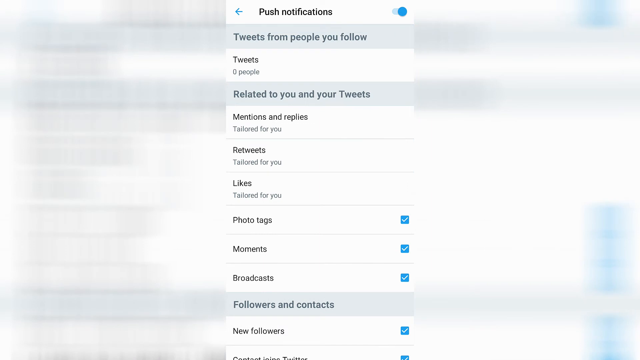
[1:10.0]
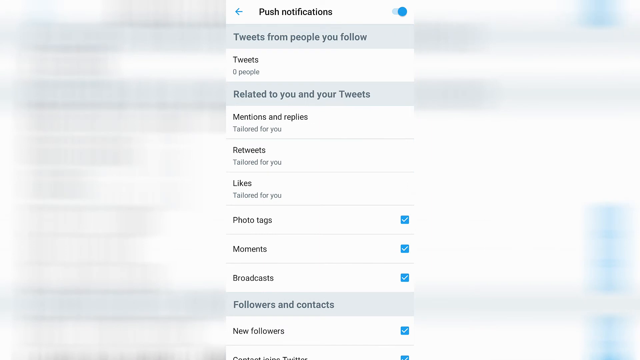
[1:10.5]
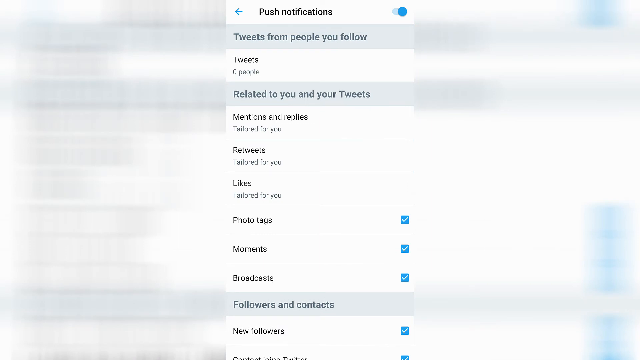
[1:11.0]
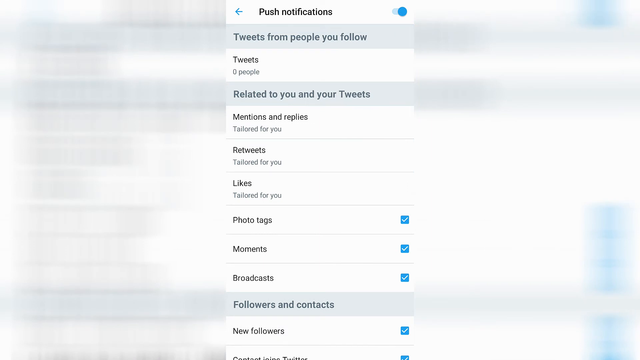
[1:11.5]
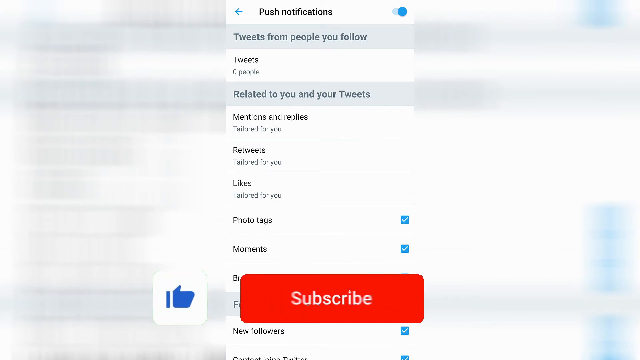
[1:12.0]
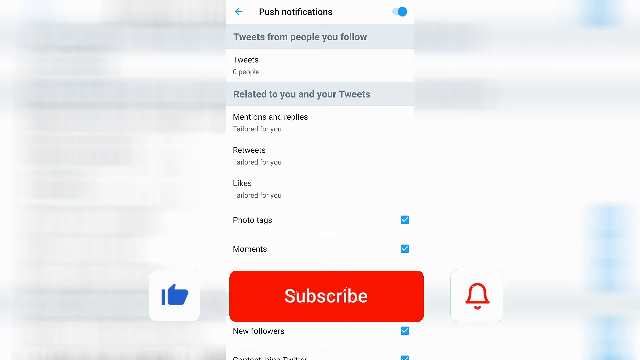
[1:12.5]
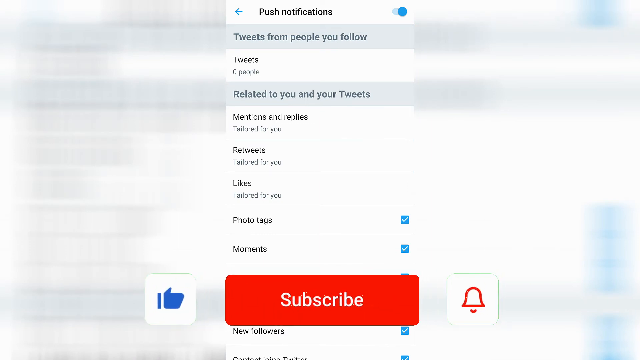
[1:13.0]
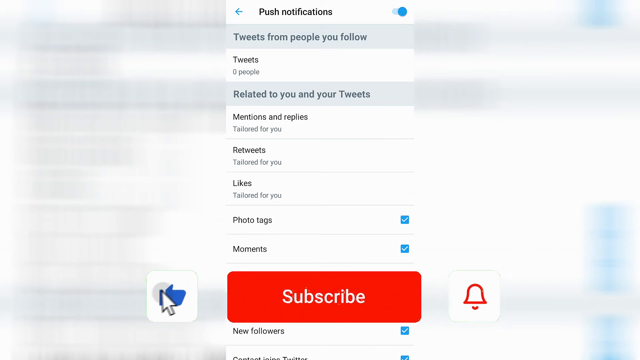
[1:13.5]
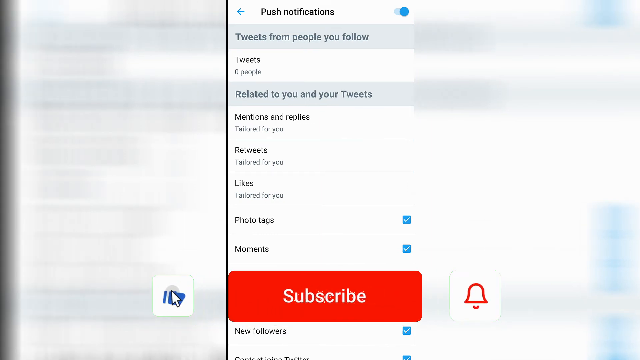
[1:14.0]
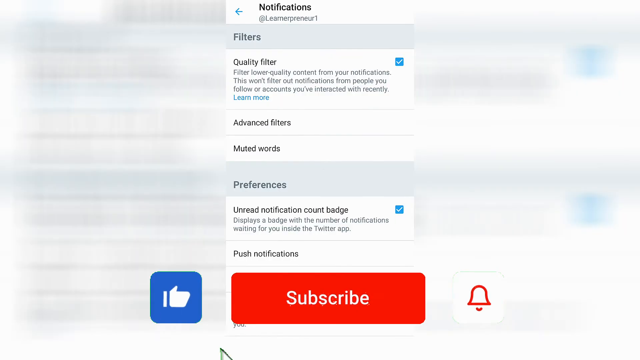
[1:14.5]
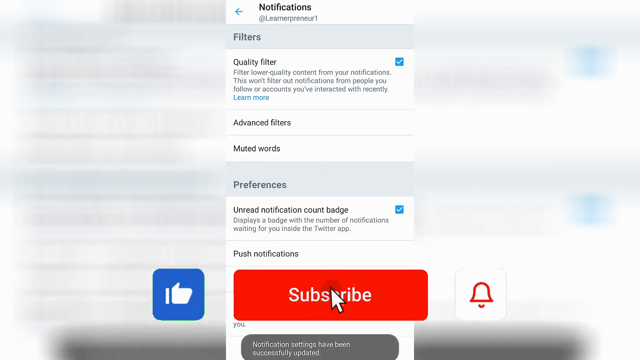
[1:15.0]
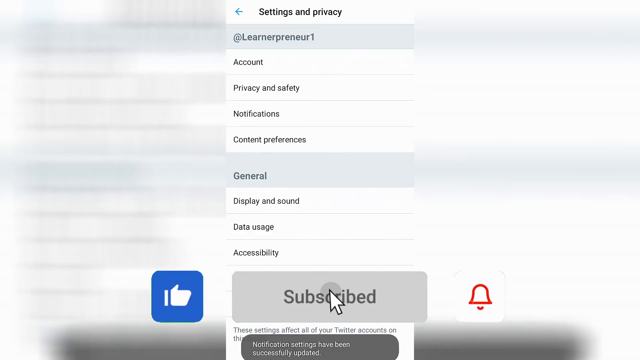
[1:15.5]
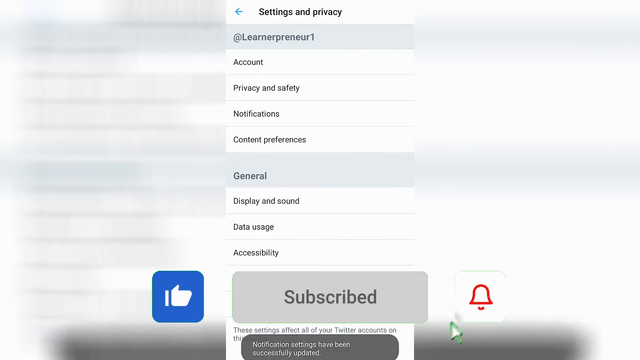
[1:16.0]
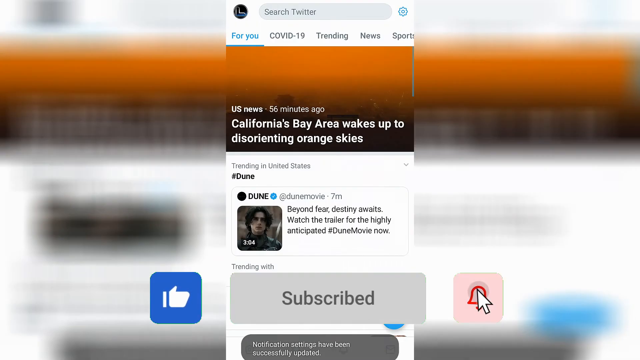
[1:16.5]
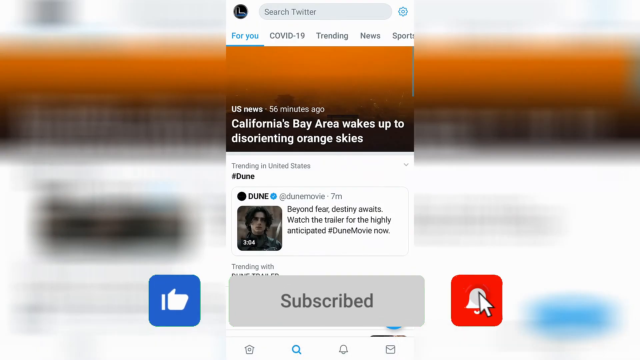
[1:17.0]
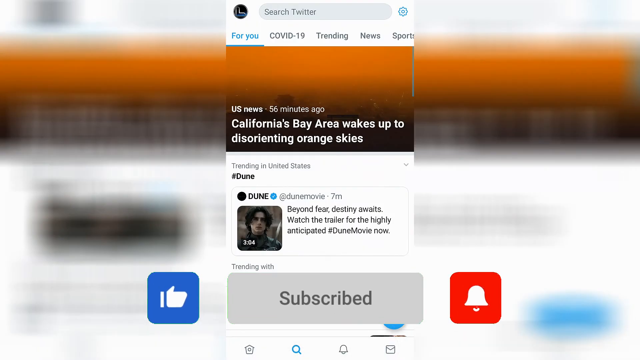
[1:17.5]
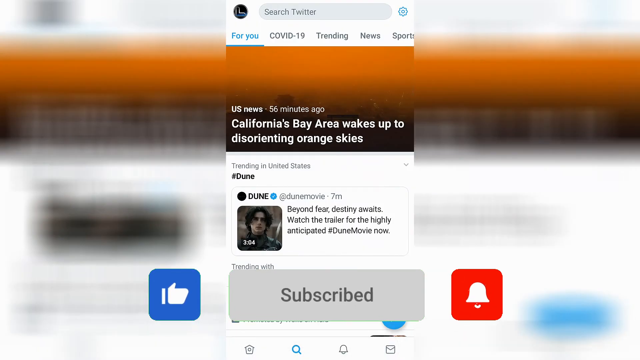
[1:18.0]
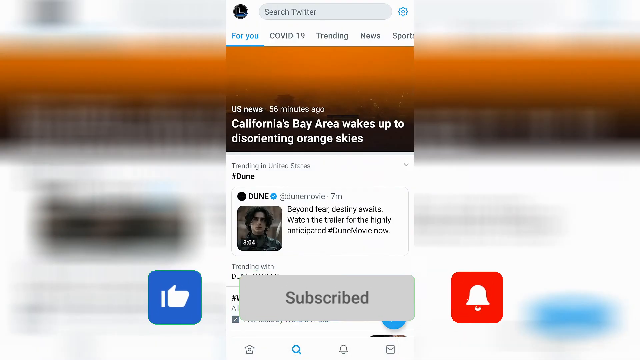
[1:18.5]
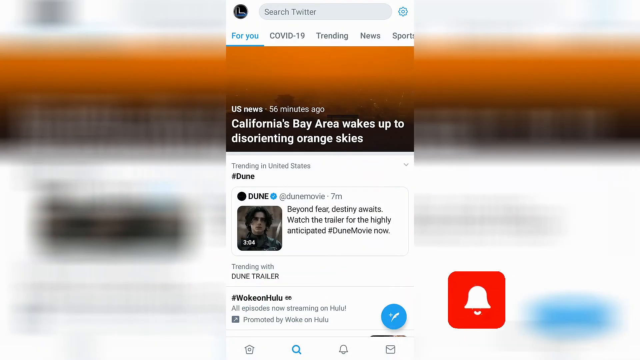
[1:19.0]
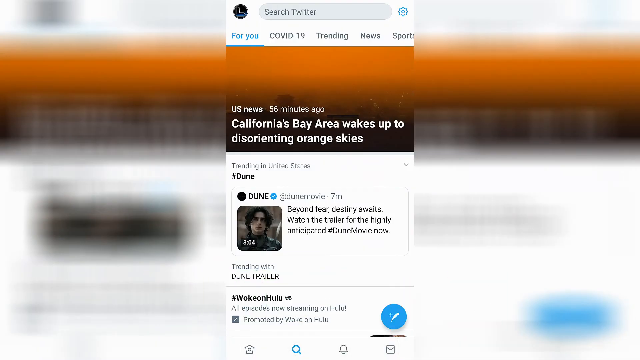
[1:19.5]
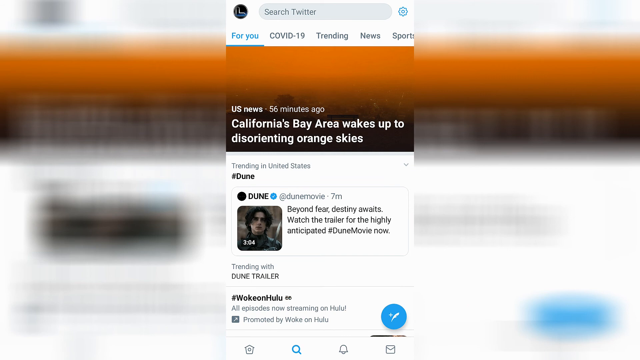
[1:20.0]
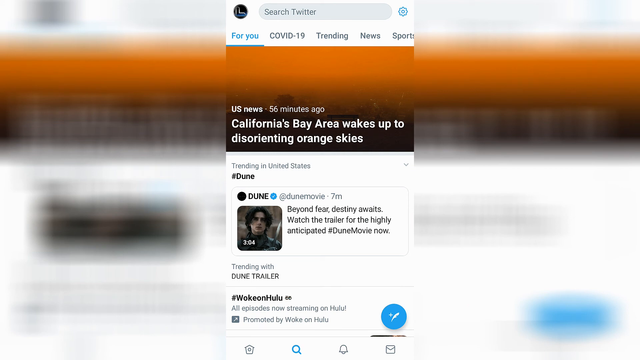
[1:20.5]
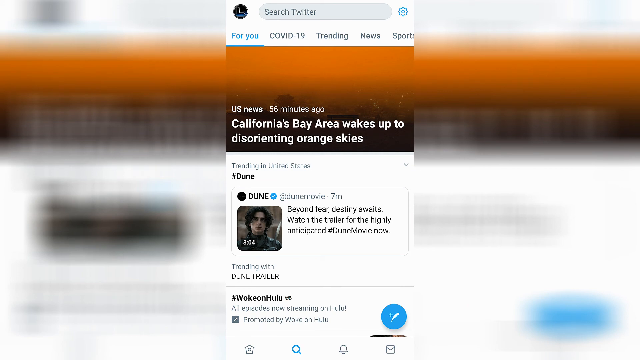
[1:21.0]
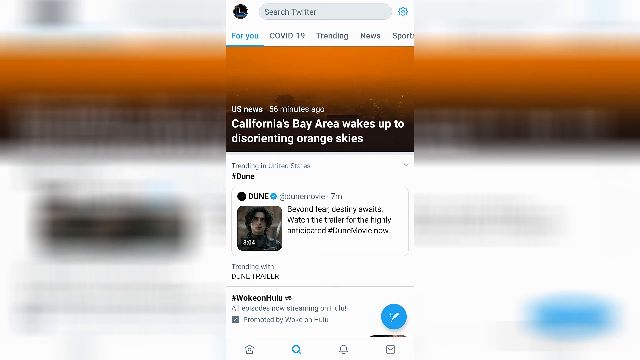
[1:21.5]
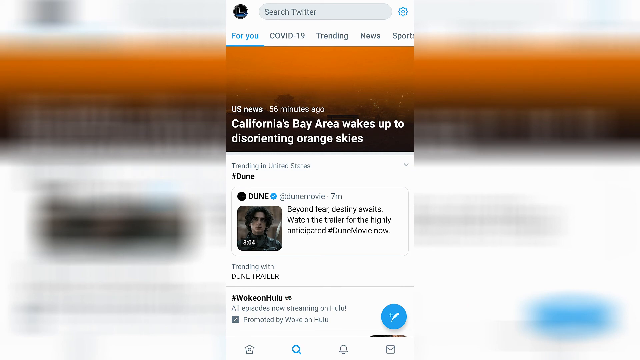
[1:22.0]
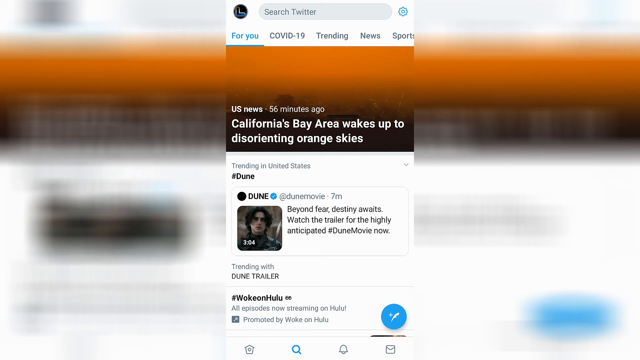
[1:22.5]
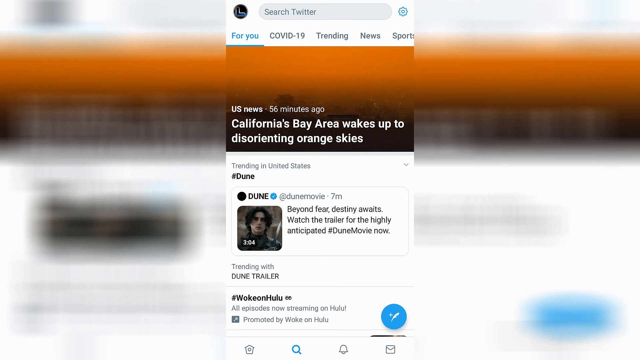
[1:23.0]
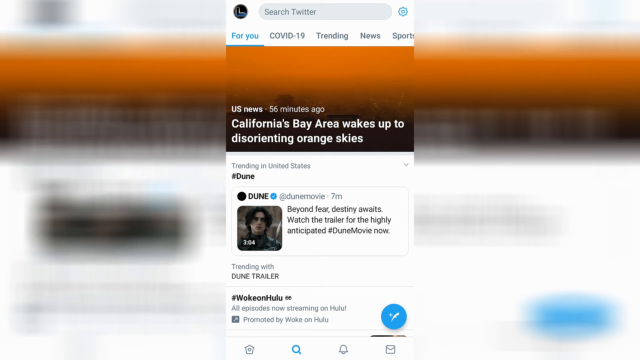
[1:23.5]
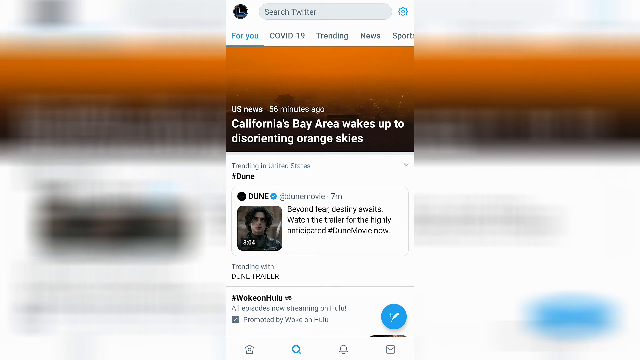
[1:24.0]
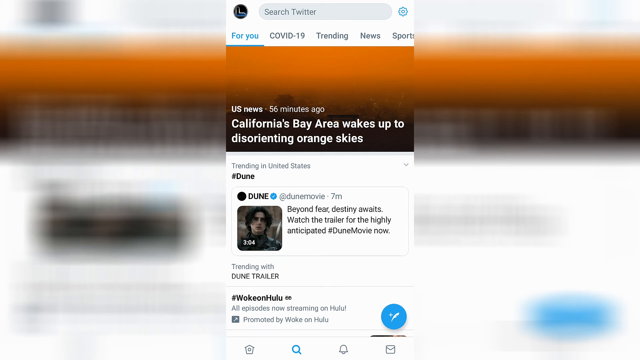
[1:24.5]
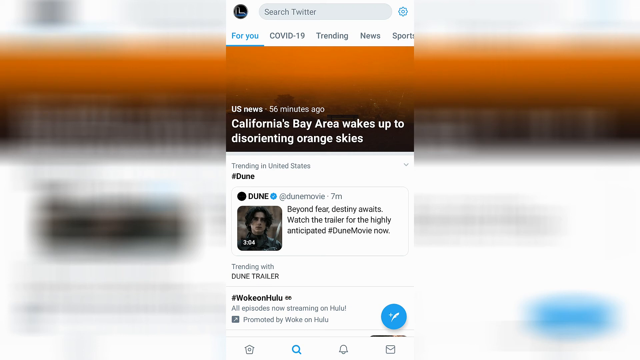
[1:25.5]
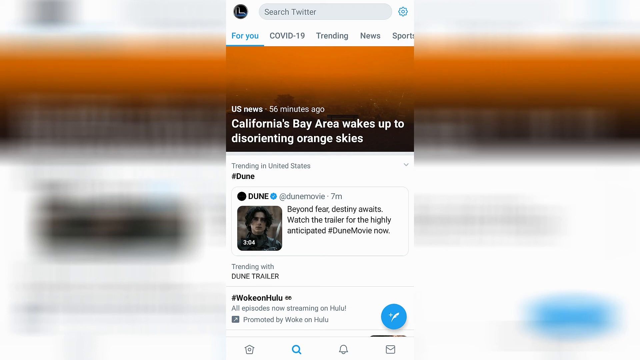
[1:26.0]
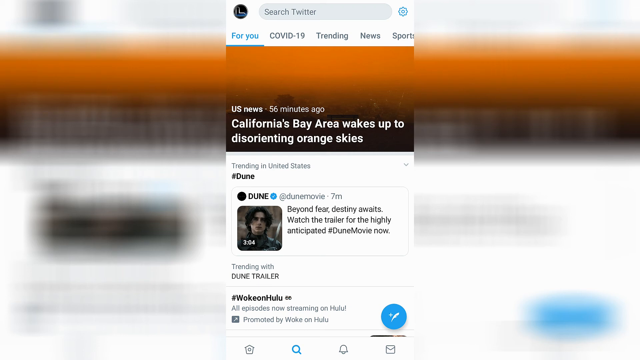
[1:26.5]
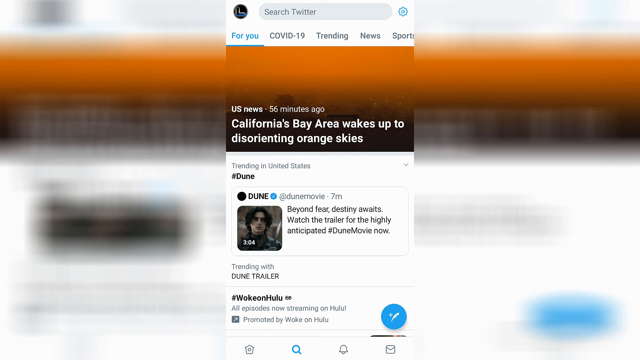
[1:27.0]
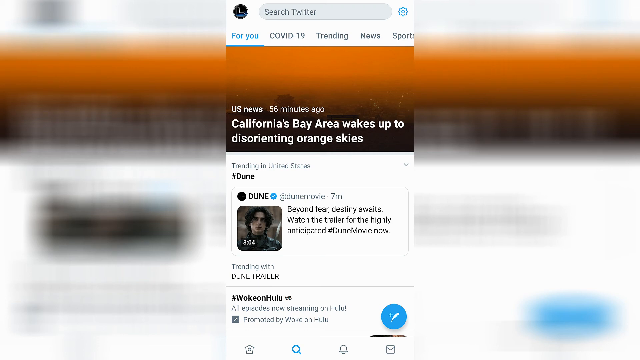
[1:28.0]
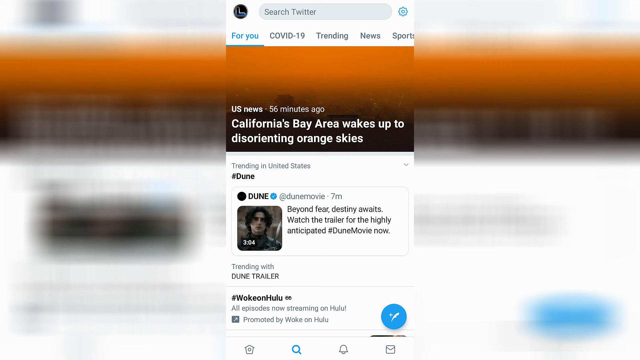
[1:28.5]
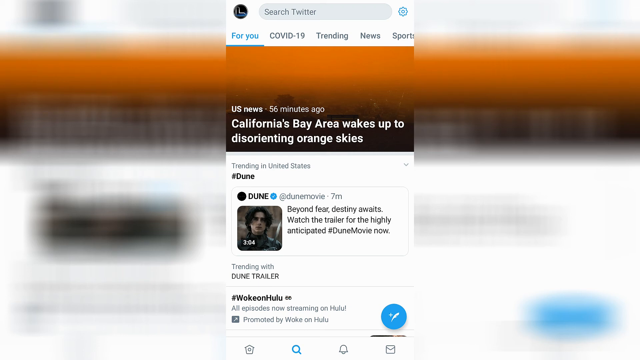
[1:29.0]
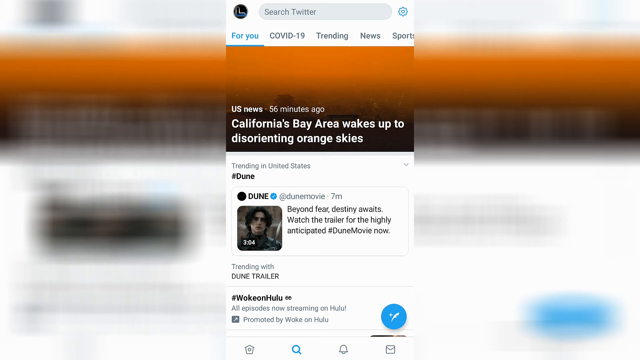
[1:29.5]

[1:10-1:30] The push notifications page is still on screen when the three buttons with the thumbs-up, subscribe, and bell pop up from the bottom of the screen. The cursor clicks the thumbs-up button, and its colors invert. It then clicks the subscribe button: the red turns to light gray, "subscribe" changes to "subscribed," and that turns to dark gray. Next it clicks the bell button; the bell rings and the colors invert, with the bell turning from red to white and the button's background turning from white to red. The view then returns to the Twitter homepage with the same news about California's Bay Area waking up to disorienting orange skies and the same Dune hashtags with Timothee Chalamet. The buttons shrink and disappear, starting with the thumbs-up button. The Twitter homepage remains on screen for a while, about 10 seconds.